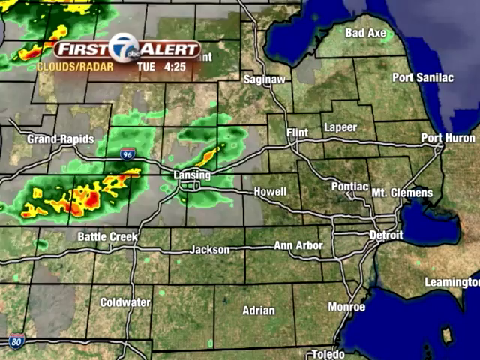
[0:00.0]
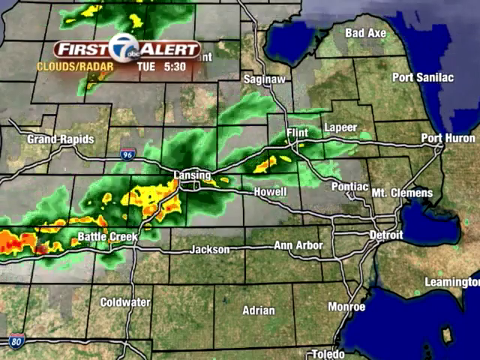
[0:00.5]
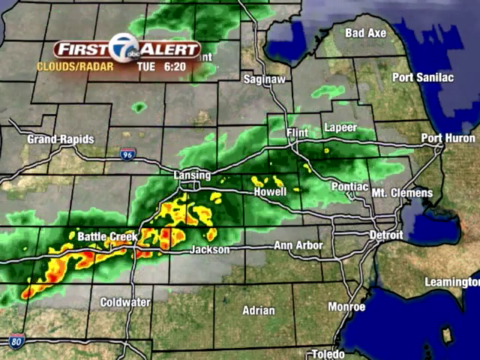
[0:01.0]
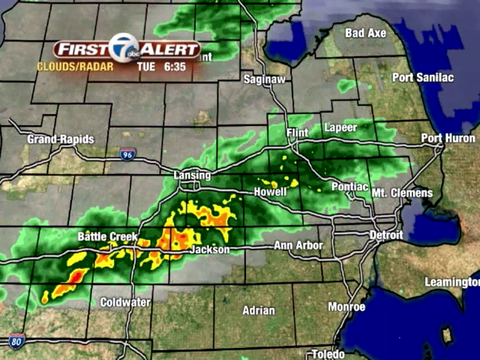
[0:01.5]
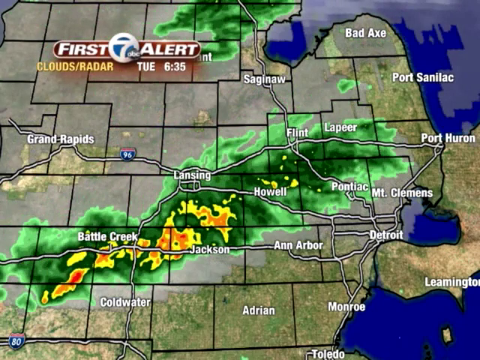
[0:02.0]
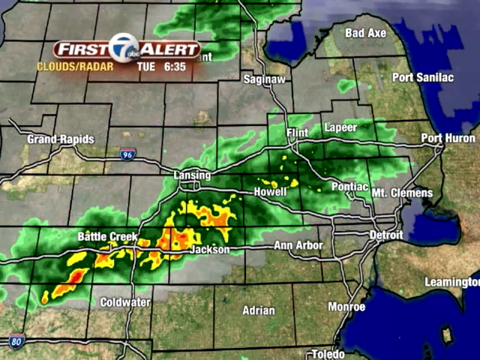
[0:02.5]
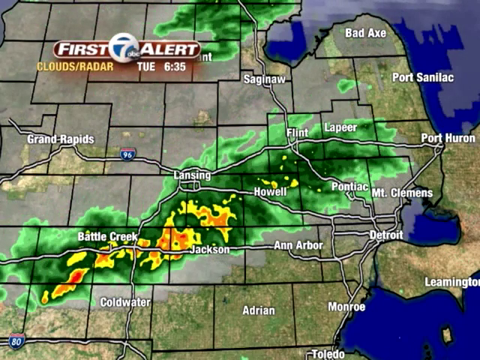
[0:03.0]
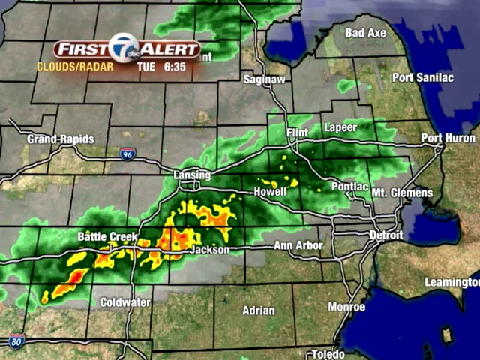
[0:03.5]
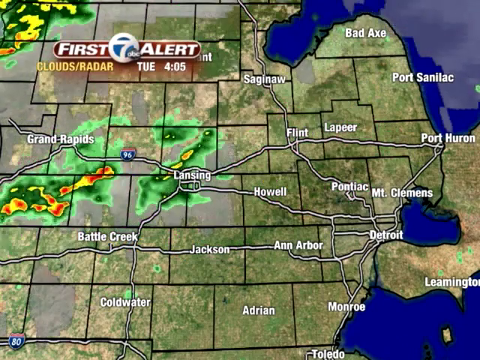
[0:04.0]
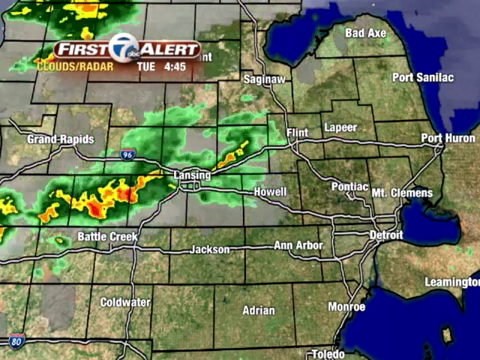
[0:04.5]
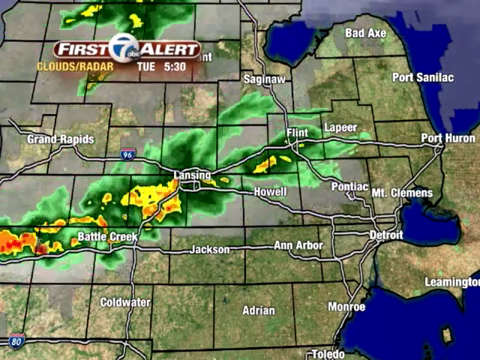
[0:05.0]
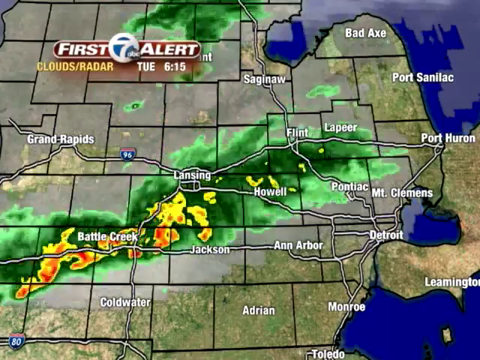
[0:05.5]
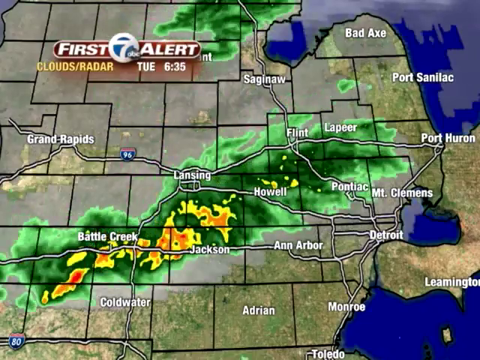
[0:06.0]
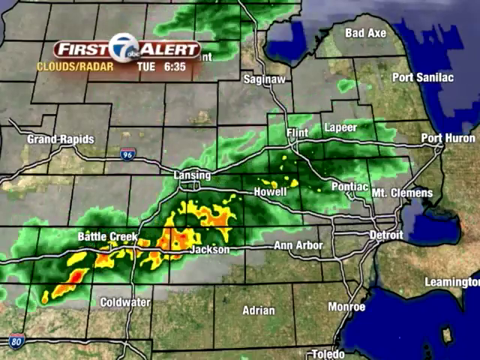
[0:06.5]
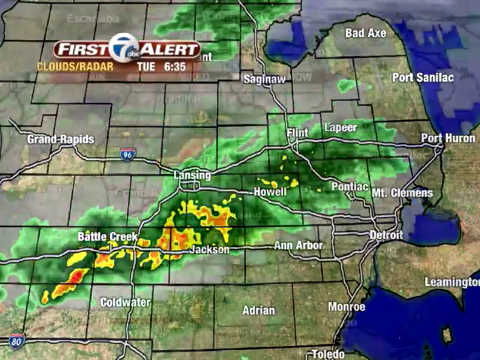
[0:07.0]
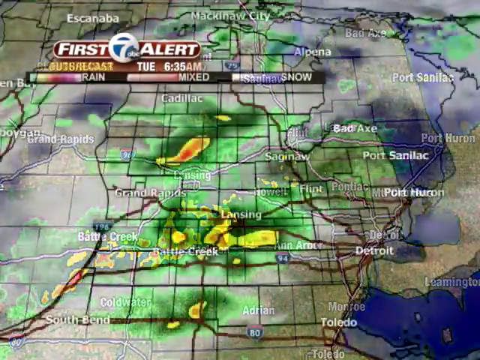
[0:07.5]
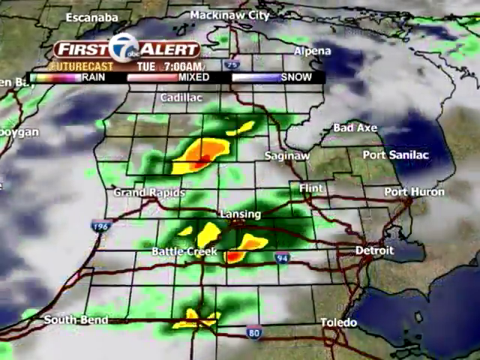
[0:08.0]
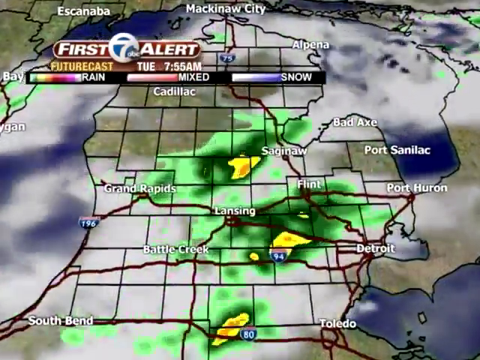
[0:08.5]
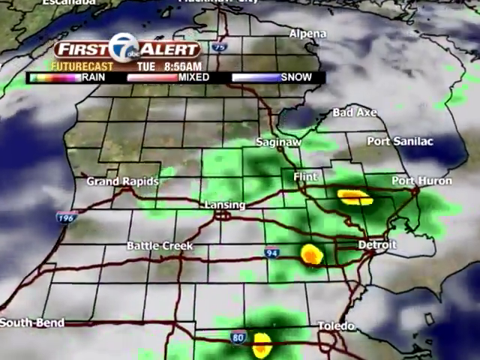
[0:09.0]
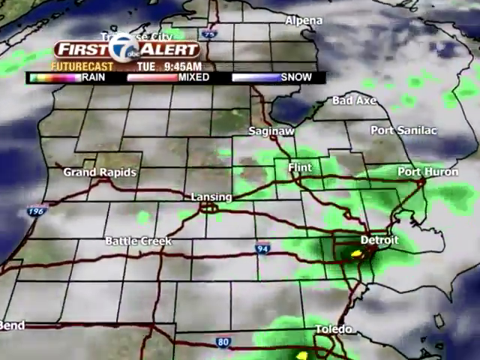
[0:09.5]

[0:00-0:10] The video opens on a map of what looks like Africa and America, then switches to a large area where green moves around the map. It seems to show weather and rain, with green and red areas, and a subtitle reads "where are the clouds". There are places of cities around the map.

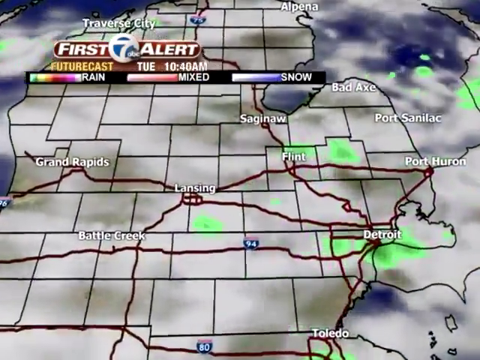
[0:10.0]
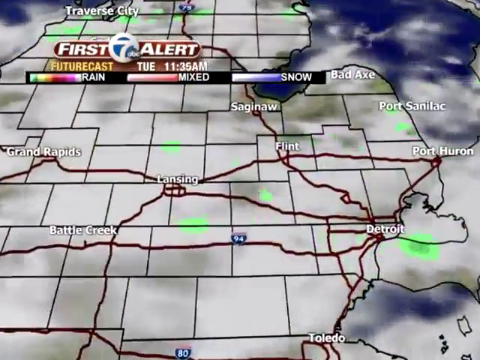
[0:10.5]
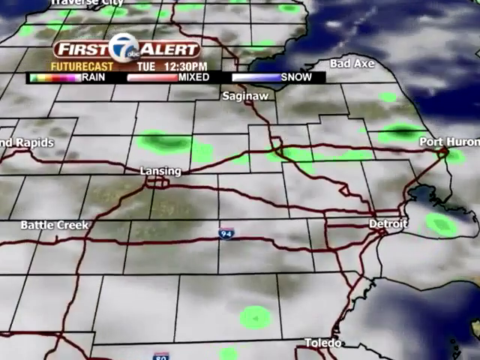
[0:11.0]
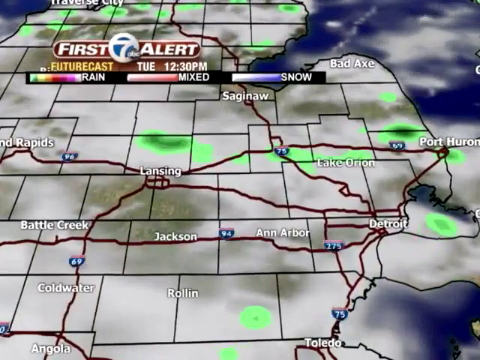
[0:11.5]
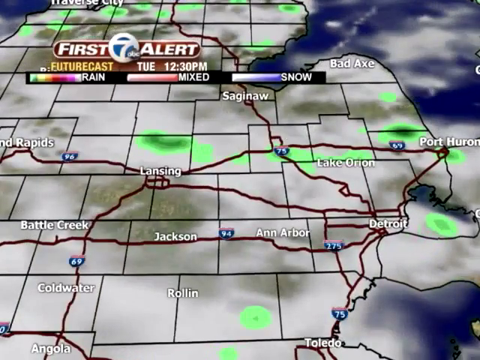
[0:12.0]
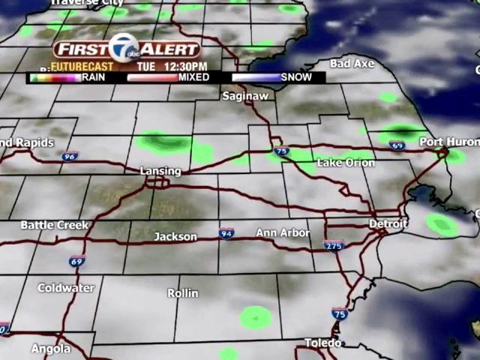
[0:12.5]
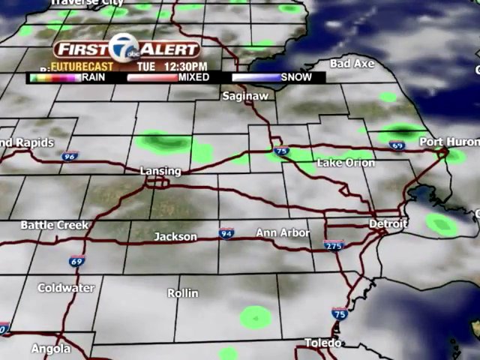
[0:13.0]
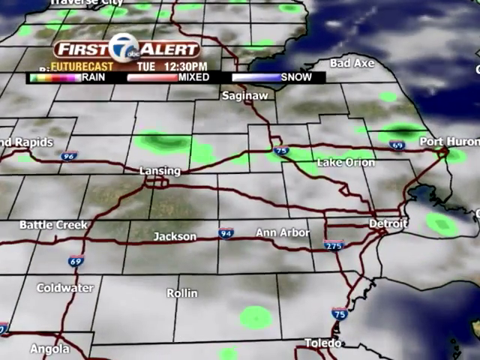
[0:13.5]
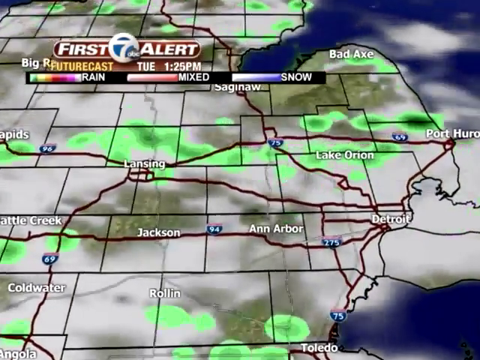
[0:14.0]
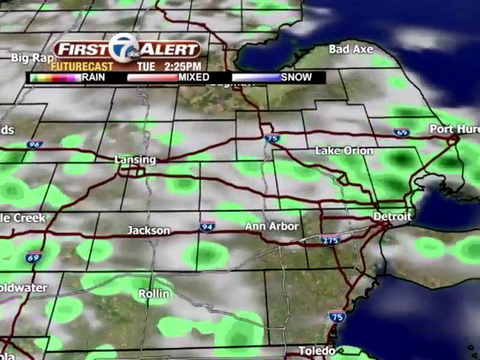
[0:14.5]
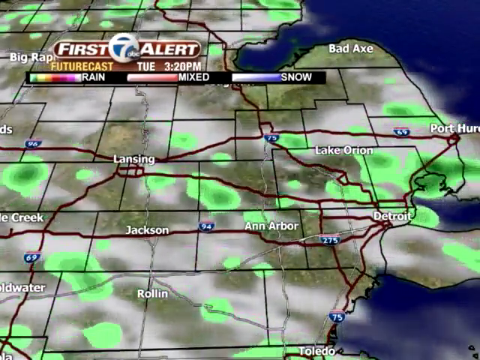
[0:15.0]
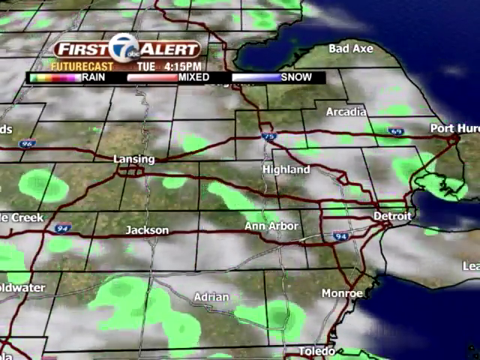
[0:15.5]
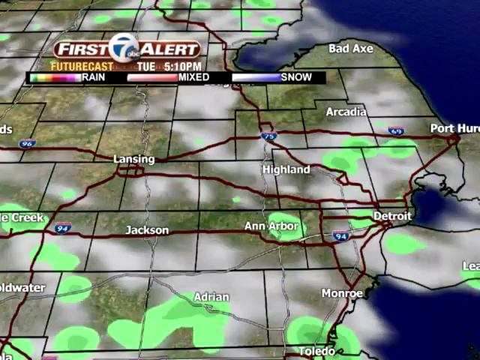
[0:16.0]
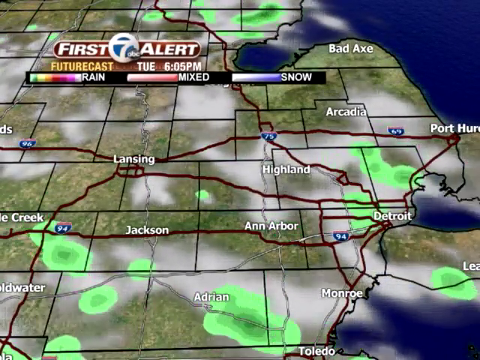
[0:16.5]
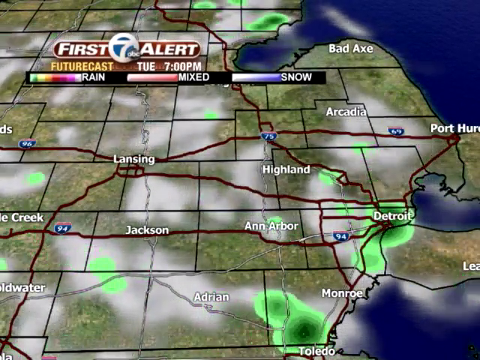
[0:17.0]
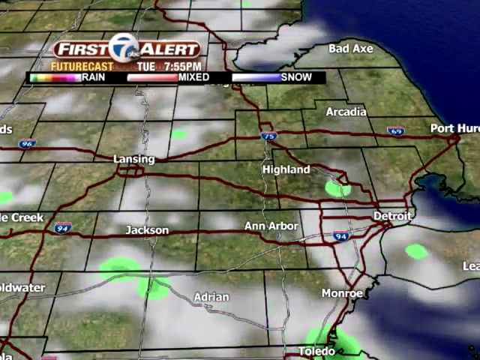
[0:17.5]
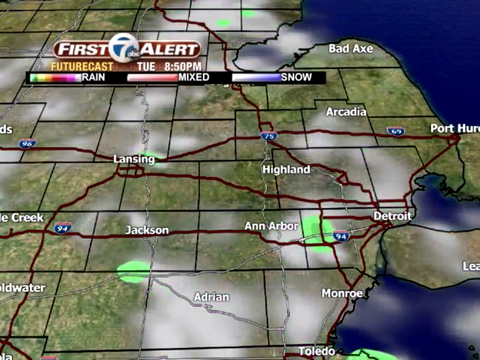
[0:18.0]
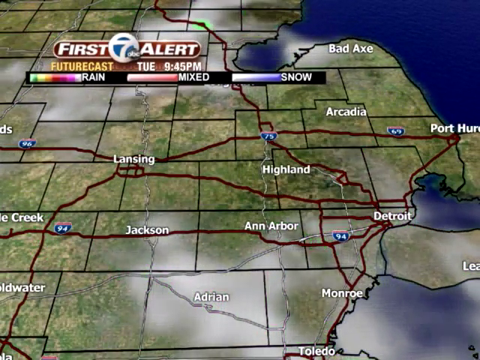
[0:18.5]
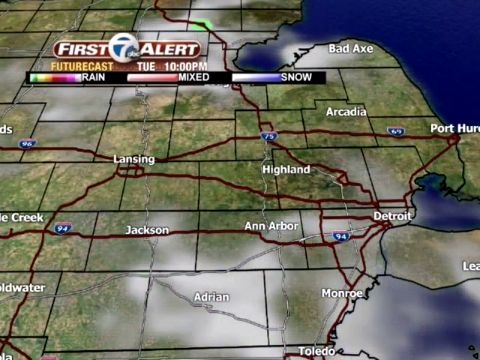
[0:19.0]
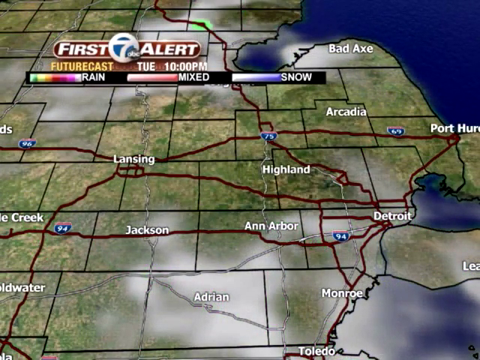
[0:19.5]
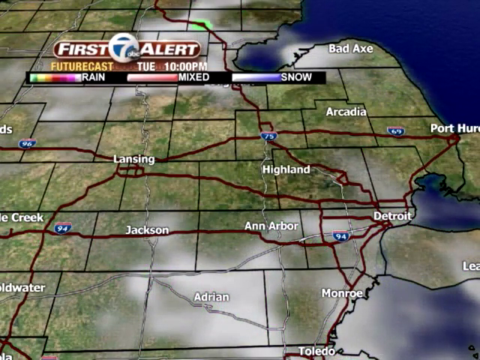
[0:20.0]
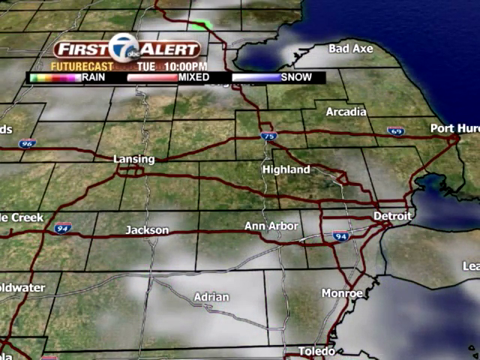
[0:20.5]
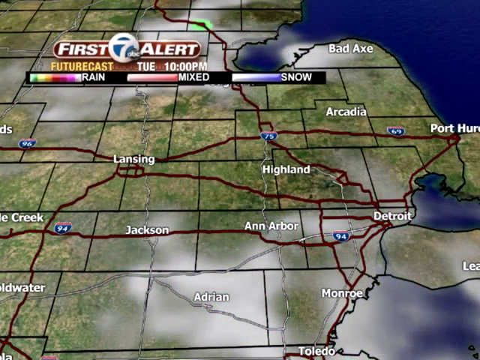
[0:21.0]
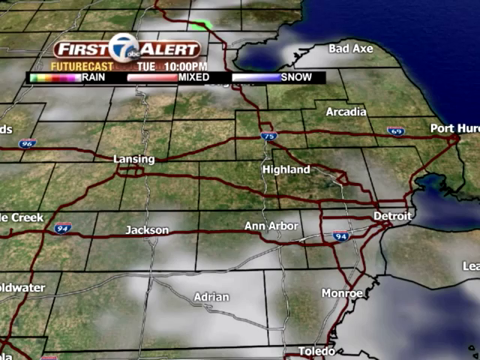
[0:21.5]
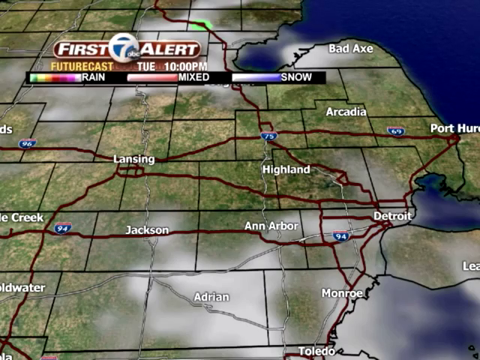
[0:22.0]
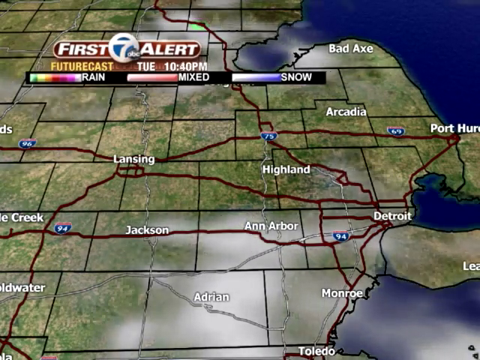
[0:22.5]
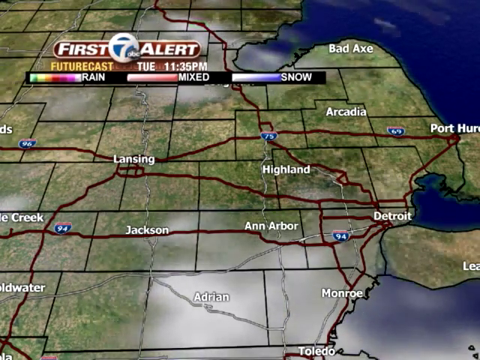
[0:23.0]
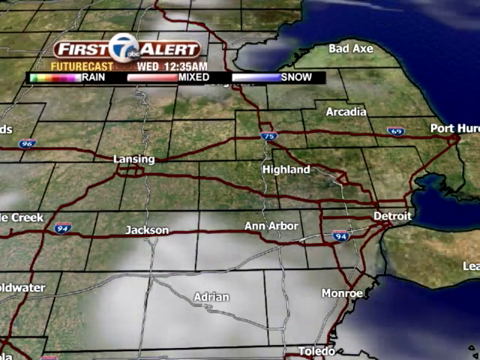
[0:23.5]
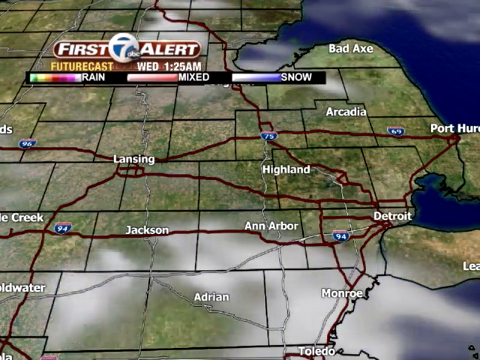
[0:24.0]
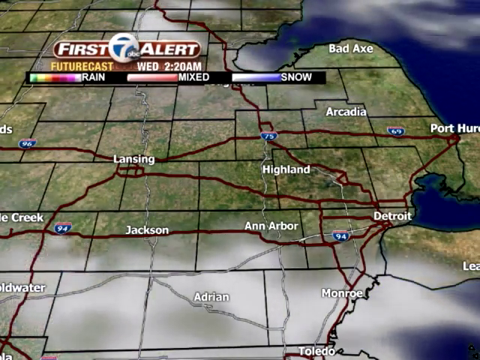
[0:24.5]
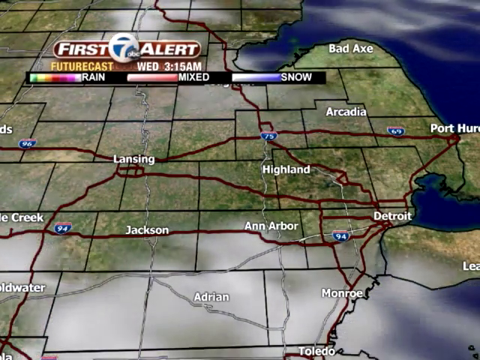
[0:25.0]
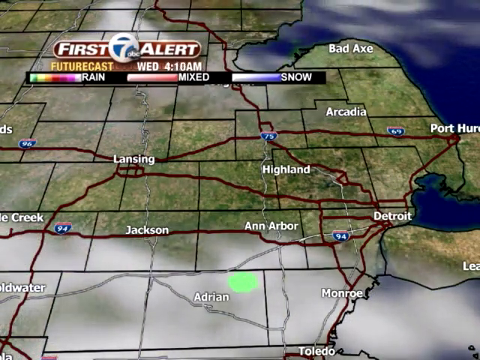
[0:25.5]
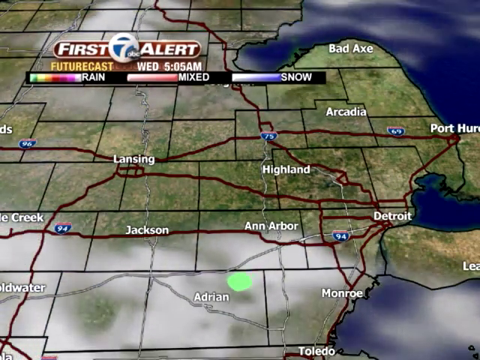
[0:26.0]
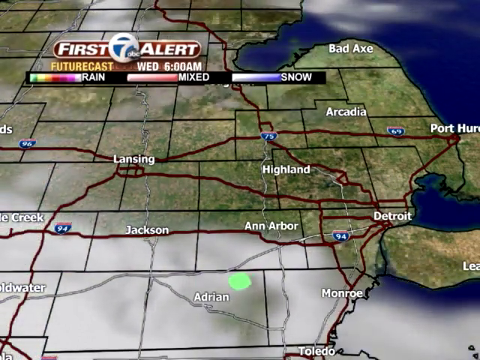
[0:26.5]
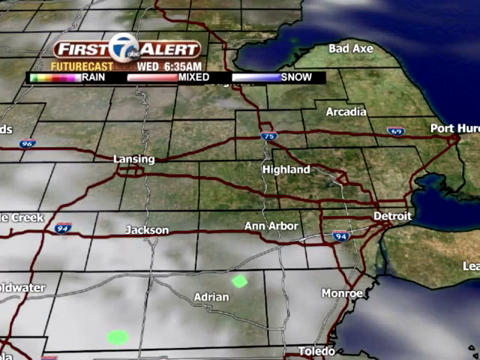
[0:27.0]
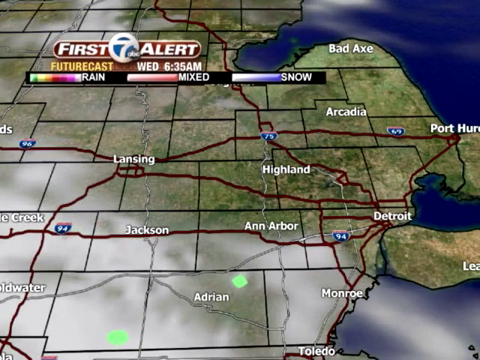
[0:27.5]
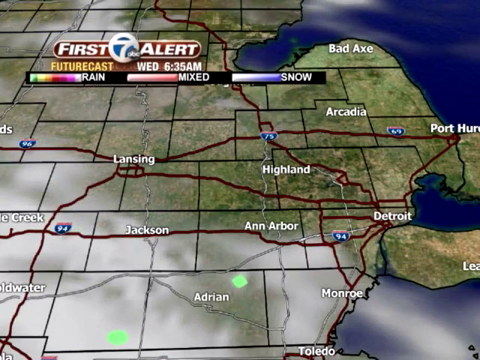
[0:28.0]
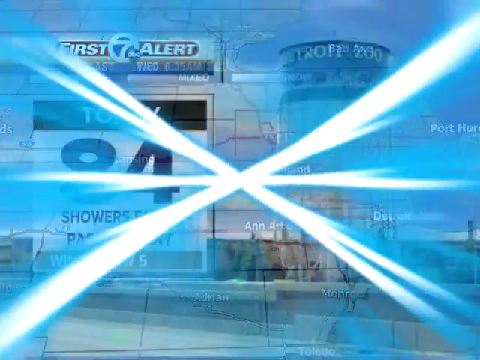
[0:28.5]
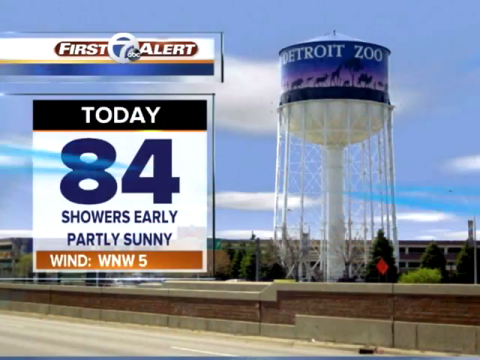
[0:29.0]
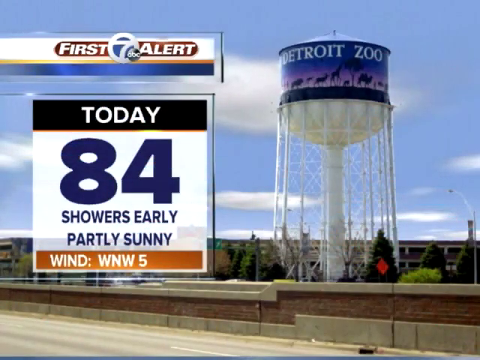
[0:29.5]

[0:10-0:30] A map shows an area with green spots around it that are presumed to be rain, parts presumed to be snow and mixed, and blue next to it. Cities on the map include Barracks, Arcadia, Hainland, Detroit, Akra, Jackson, Lansing and Adrian. The video then switches to what looks like a corn field, with text reading "first alert new station". The corn field has some things around it, is green and blue, and has a brown wall. On-screen text reads "today 84°C", "showers", "partly sunny" and wind "W5", while the background shows some clouds. A tower with white bracing appears.